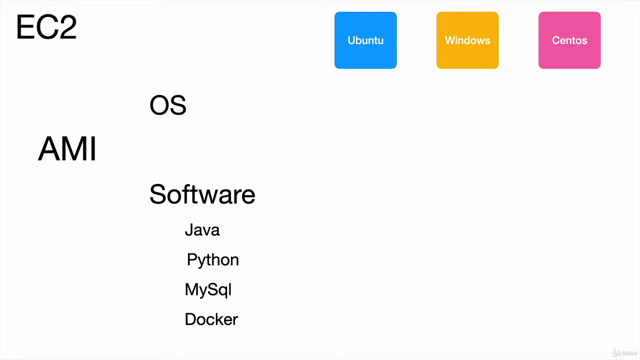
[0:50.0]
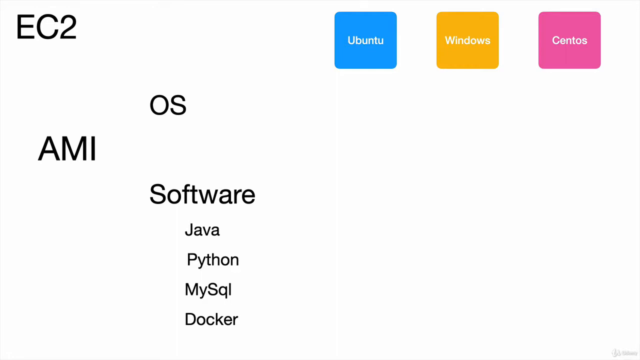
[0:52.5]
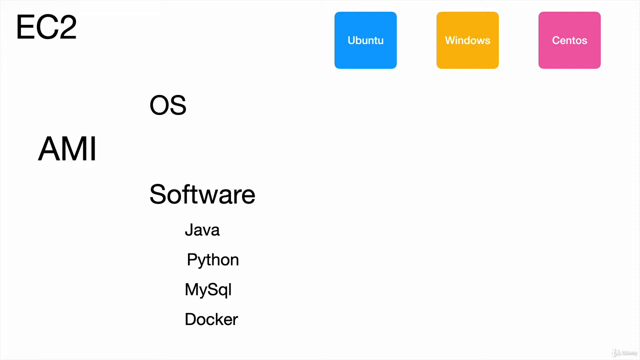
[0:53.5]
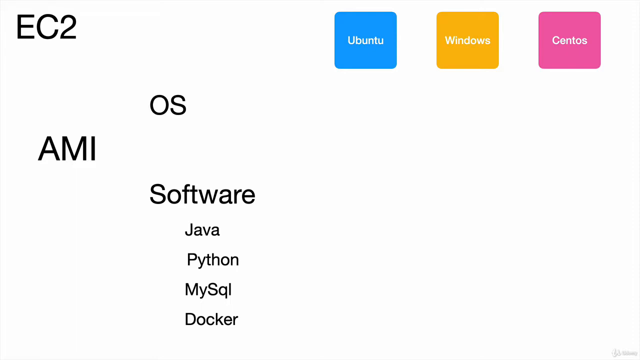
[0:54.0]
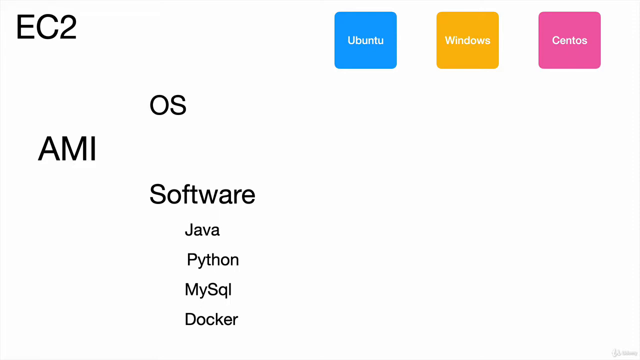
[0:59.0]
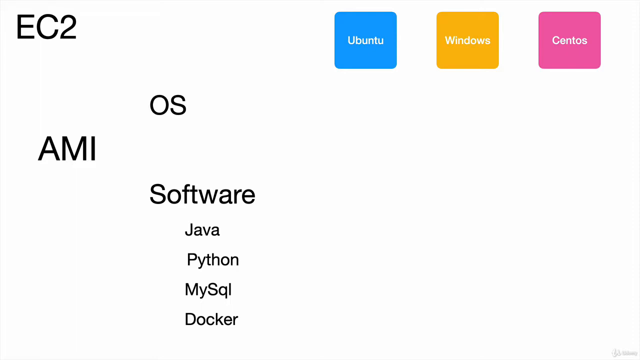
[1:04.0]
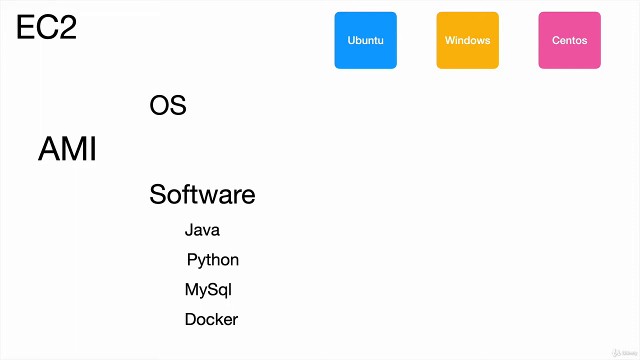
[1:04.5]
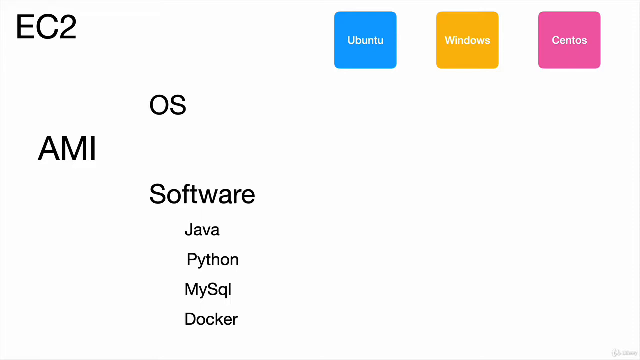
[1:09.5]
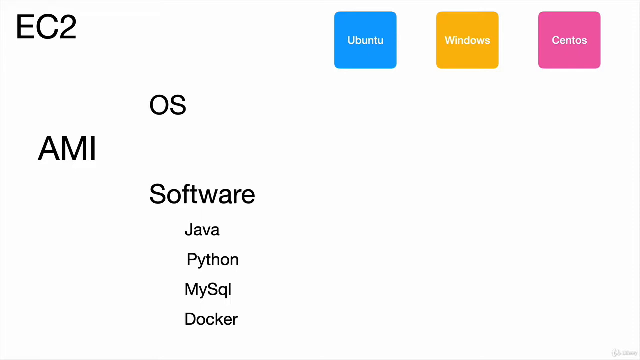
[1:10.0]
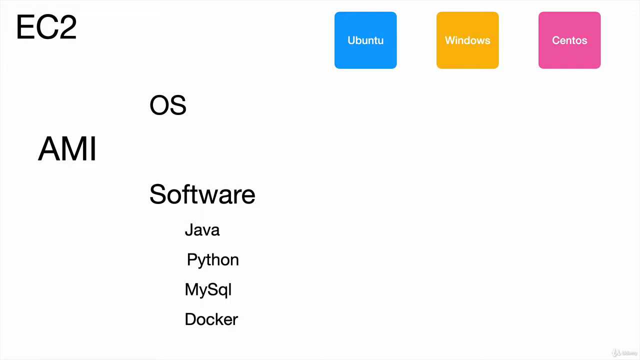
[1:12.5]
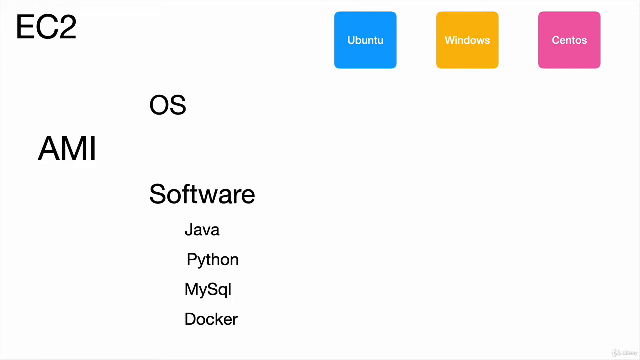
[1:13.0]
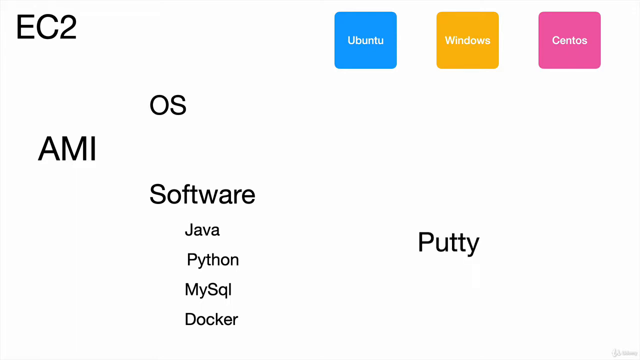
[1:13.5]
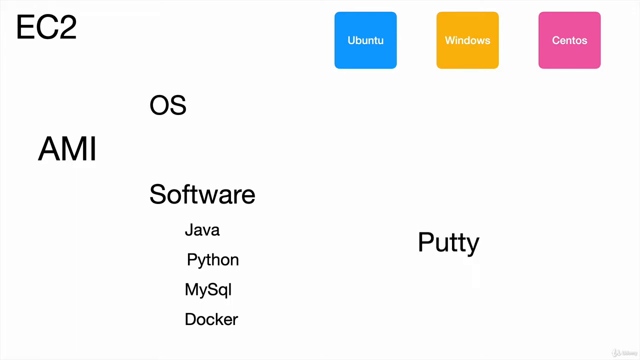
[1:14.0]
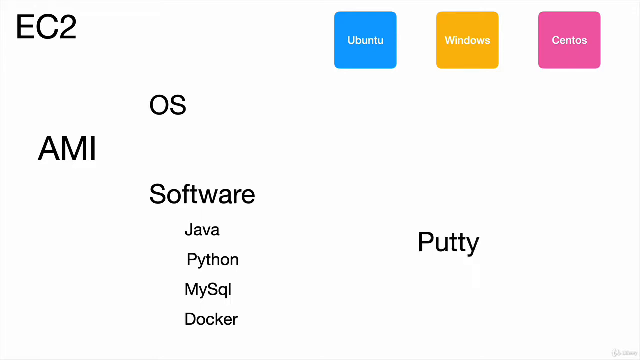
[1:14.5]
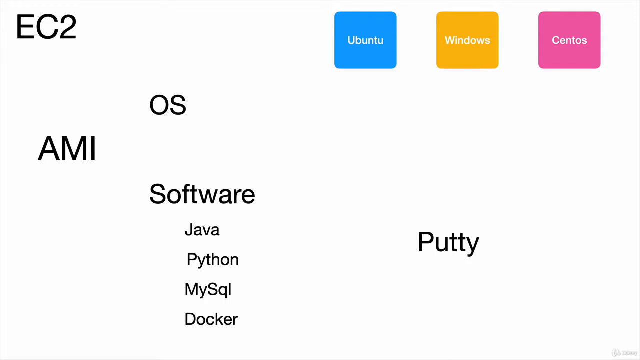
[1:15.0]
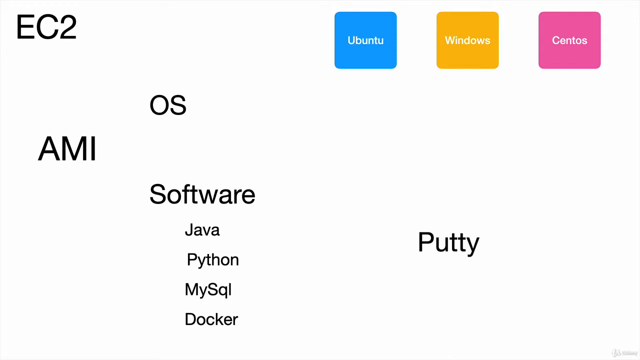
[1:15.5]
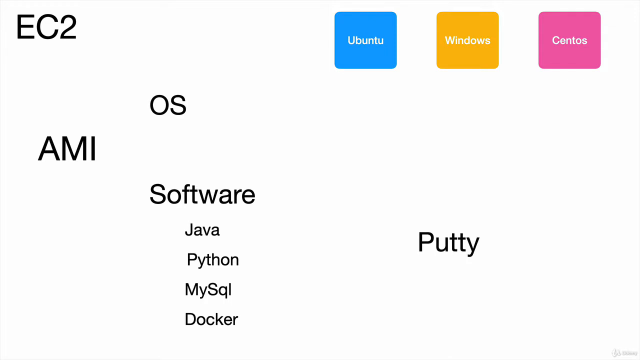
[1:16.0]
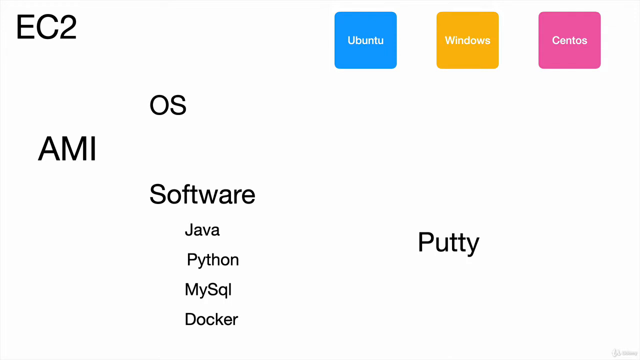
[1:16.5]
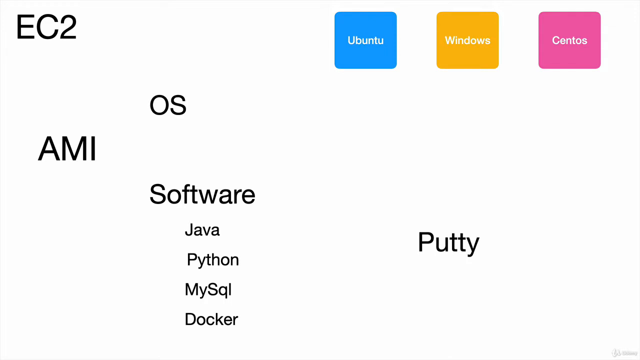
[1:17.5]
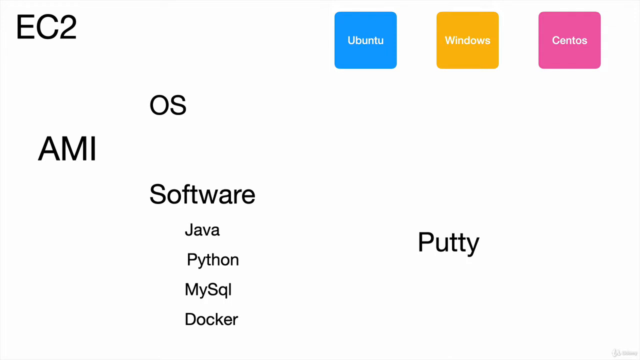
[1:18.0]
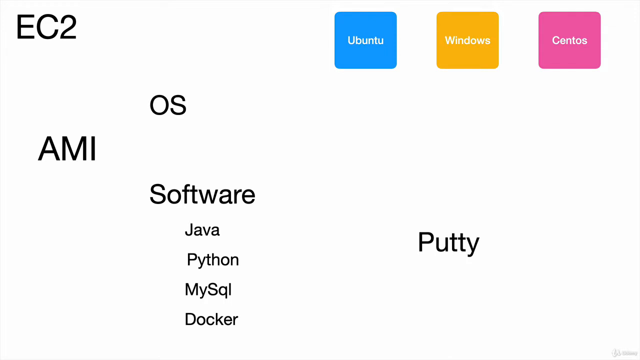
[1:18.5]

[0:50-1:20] On the white background, "EC2" is in the upper left in a medium-sized black capital font. About 40 percent down and indented, in the same type of font, is "AMI", with "OS" to its upper right and "software" to its lower right. Below "software", in smaller text, are "Java", then "Python", then "MySQL", then "Docker", each below the last. Three squares occupy the upper right-hand corner horizontally, each filled with a color and bearing a word in white text: "Ubuntu", "Windows" and "CentOS". After around 10 to 15 seconds more, the word "Putty" loads, centered in the lower right-hand corner.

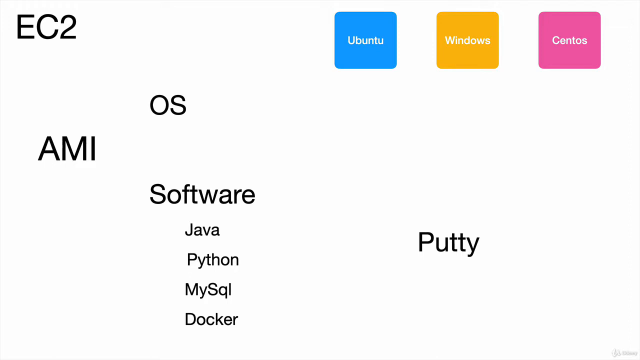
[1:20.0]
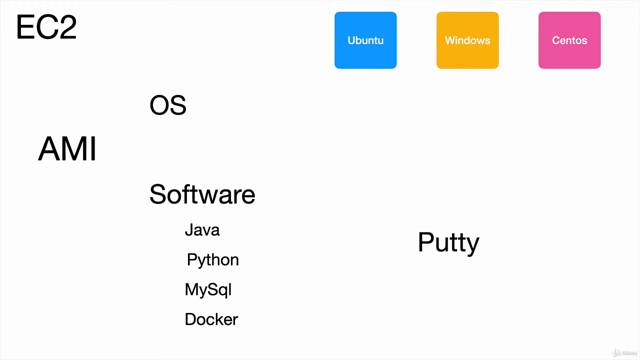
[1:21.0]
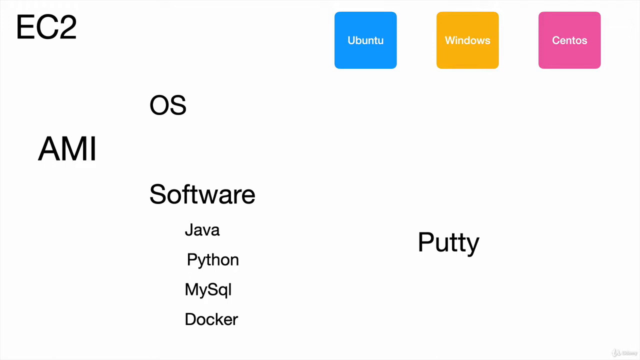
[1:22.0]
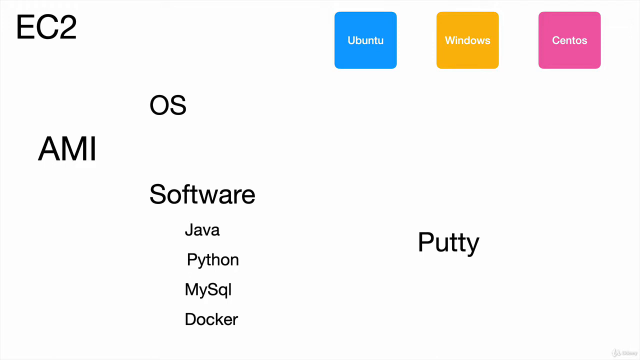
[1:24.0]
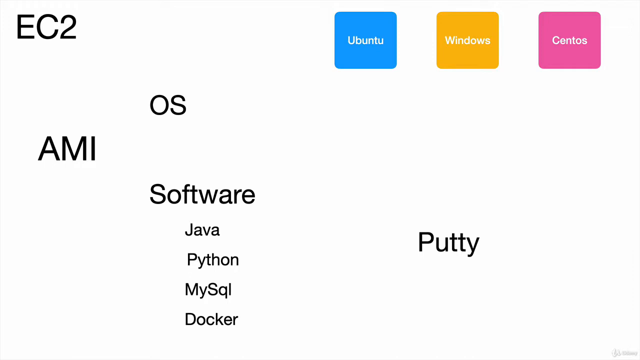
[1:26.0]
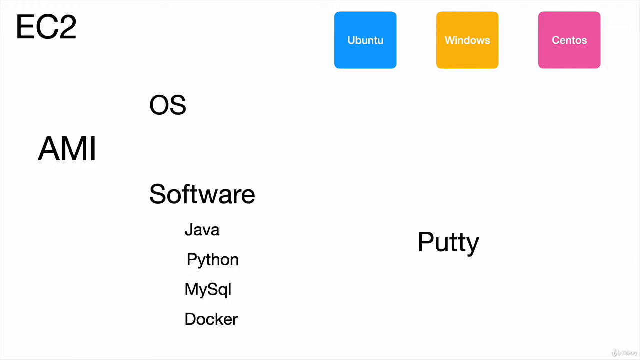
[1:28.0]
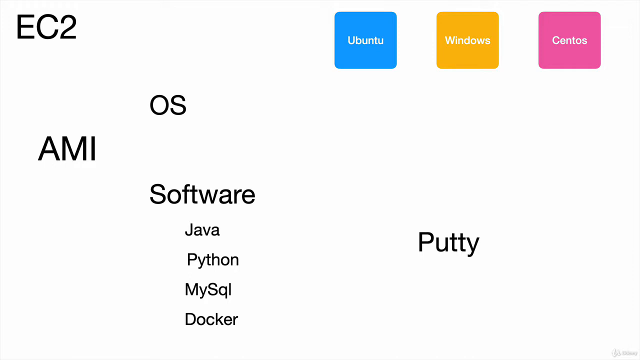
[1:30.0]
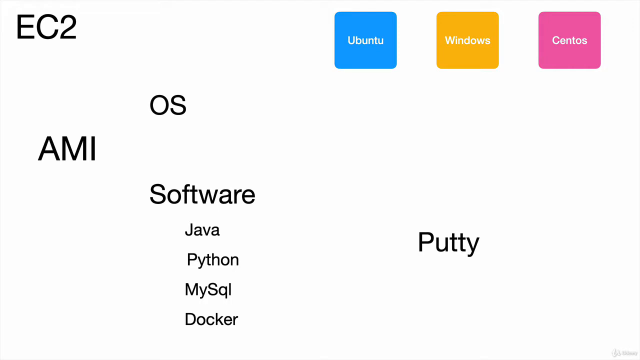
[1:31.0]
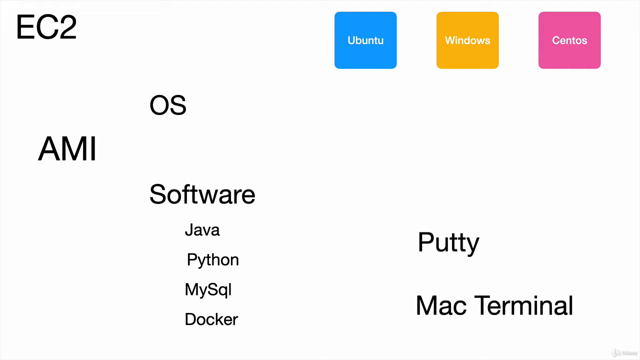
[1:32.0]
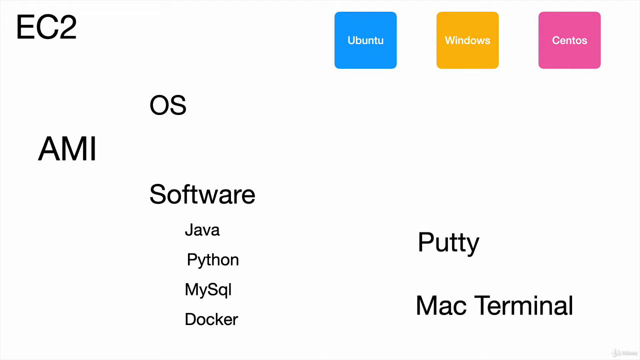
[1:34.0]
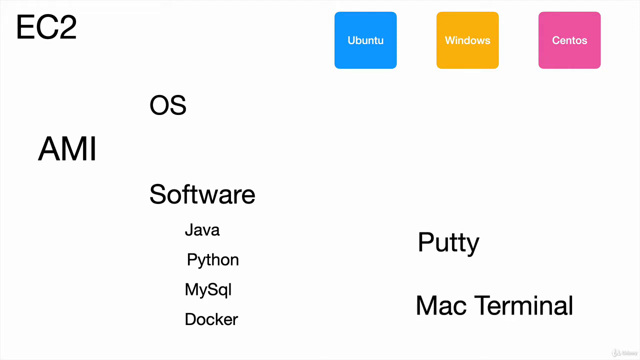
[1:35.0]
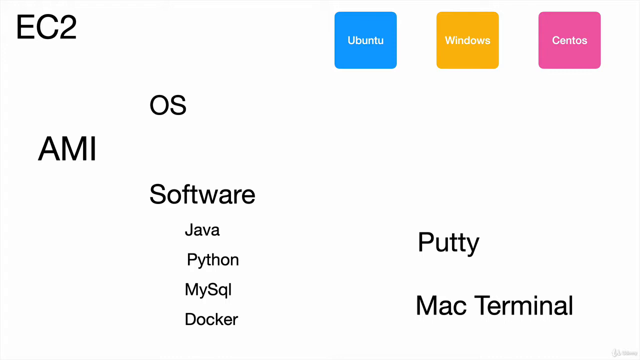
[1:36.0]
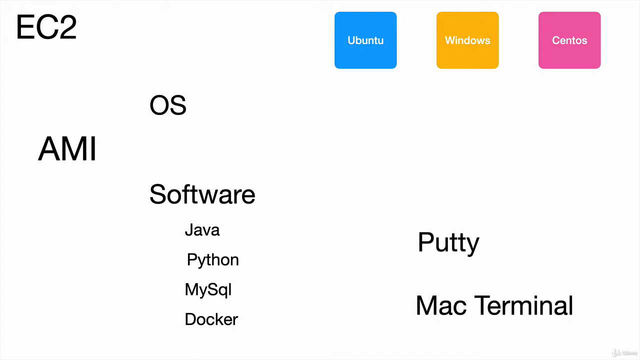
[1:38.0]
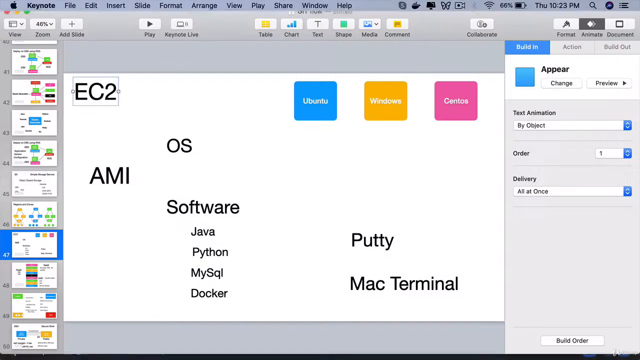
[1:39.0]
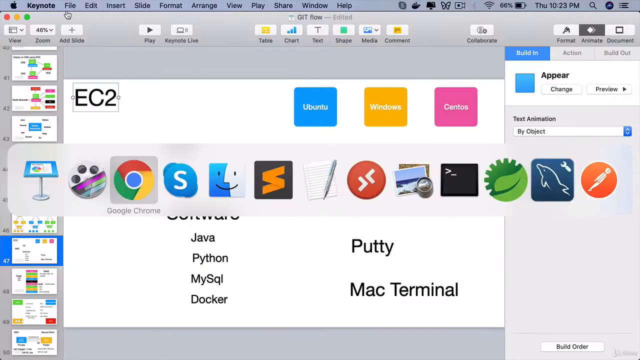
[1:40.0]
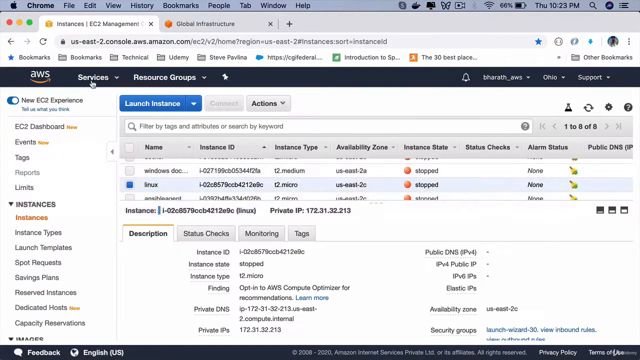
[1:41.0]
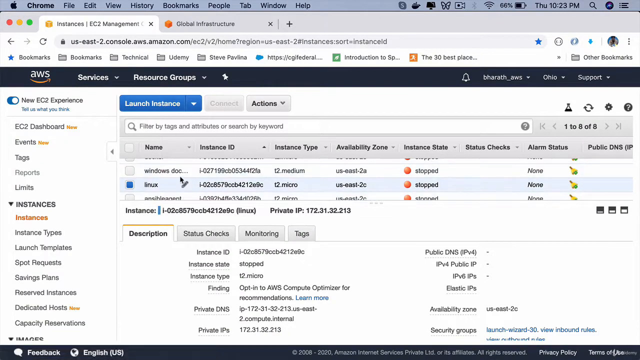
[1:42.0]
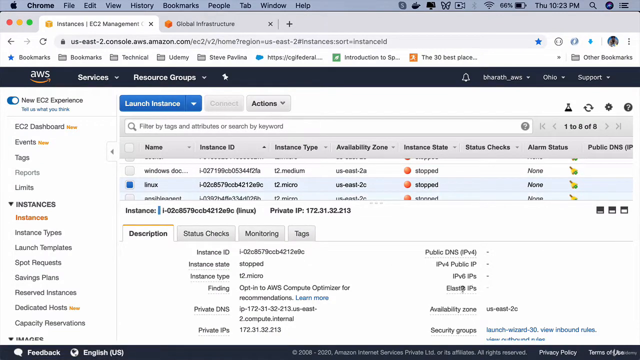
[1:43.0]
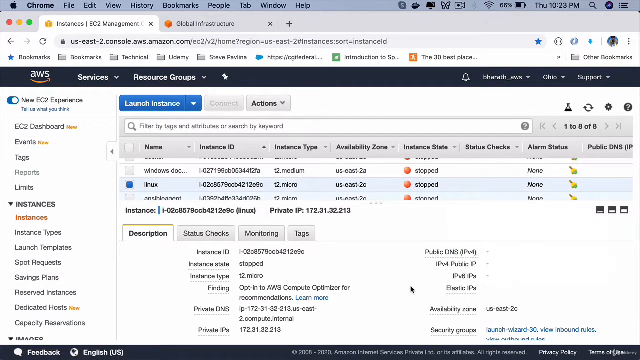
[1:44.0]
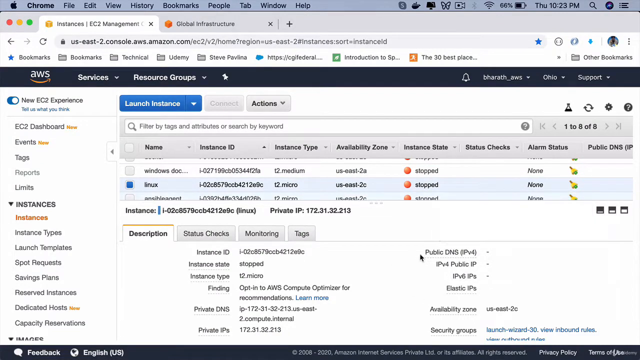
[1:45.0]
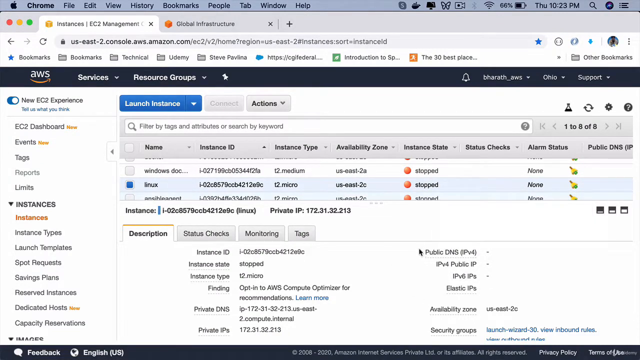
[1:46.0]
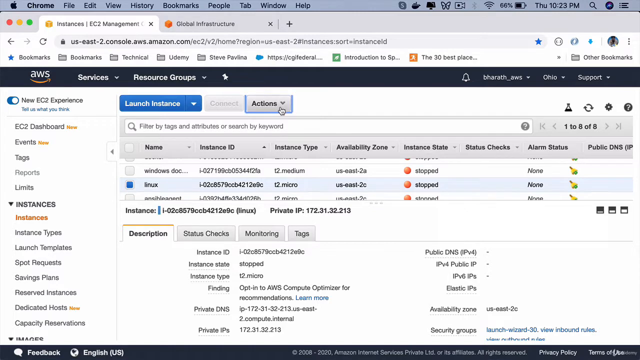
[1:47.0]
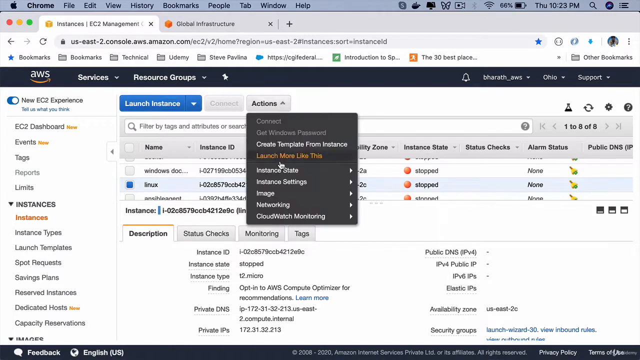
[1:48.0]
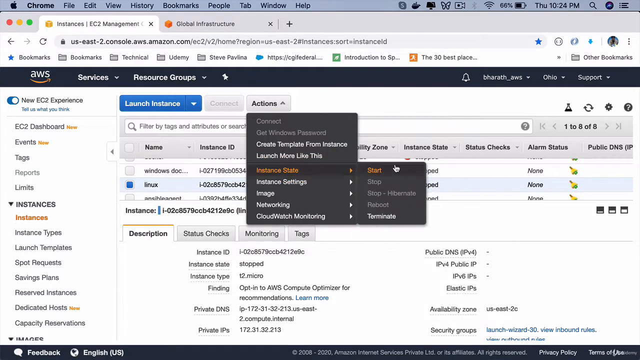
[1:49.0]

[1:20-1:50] The slide has a white background with "EC2" in large black capital letters in the upper left. Around 40% down from the top, indented in the same font, is "AMI", with "OS" to its upper right and "Software" to its lower right. Below "Software", in smaller font, are four lines with the words "Java", "Python", "MySQL" and "Docker". In the upper right-hand corner are three squares shaded in three different colors, each with one word in white text: "Ubuntu", "Windows" and "CentOS". The word "Putty" is centered in the lower right quadrant, and the words "Mac Terminal" are then added below it. The video then goes to a screenshot of someone's desktop on a Mac computer, with the Apple icon and the menu bar at the top, the same slide in the center, and a toolbar overlaid on top of everything.